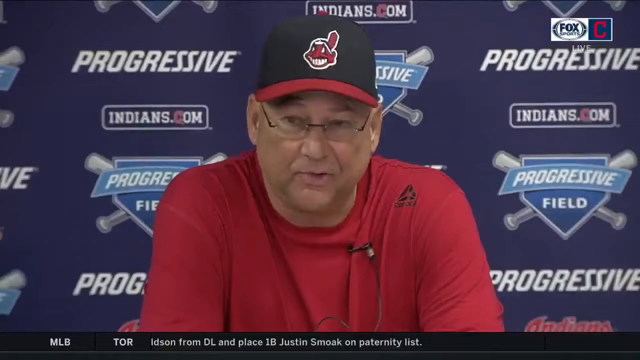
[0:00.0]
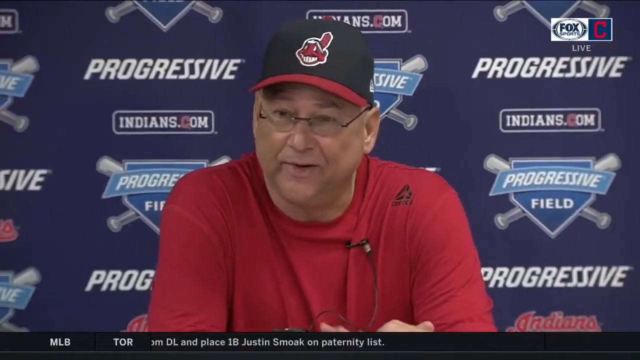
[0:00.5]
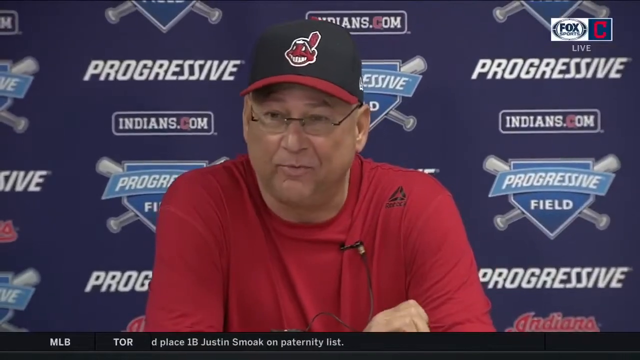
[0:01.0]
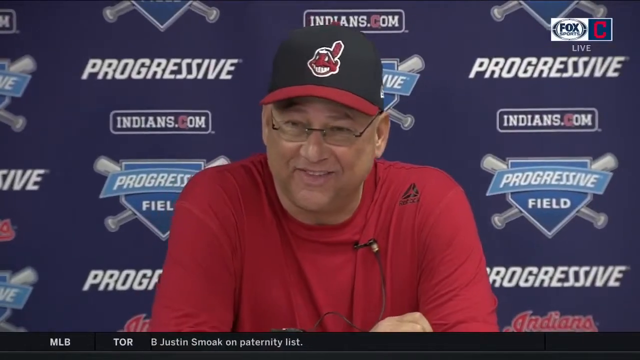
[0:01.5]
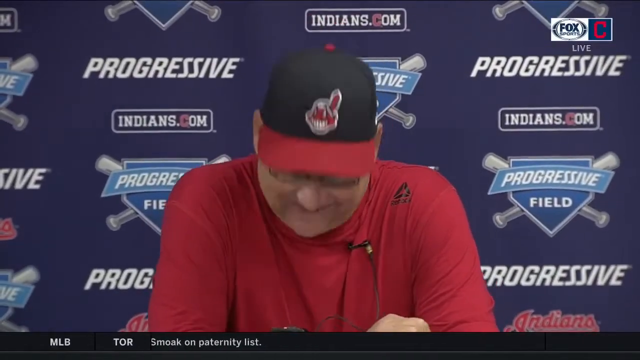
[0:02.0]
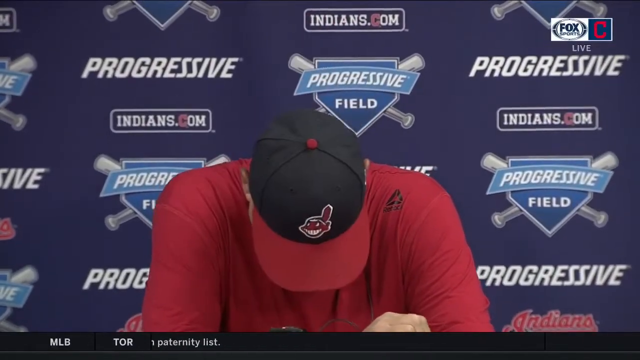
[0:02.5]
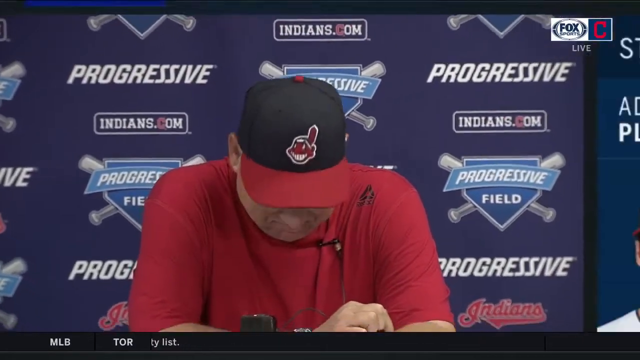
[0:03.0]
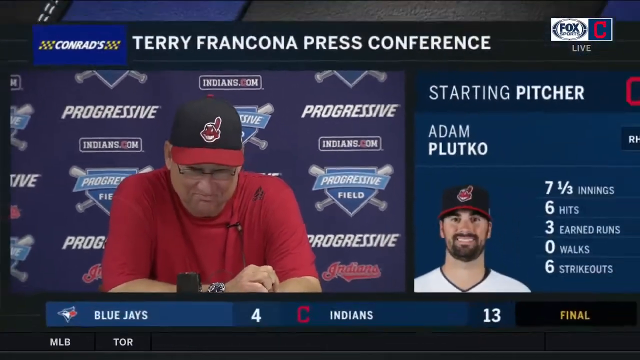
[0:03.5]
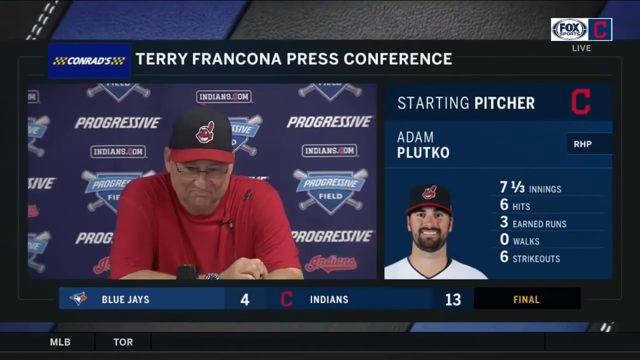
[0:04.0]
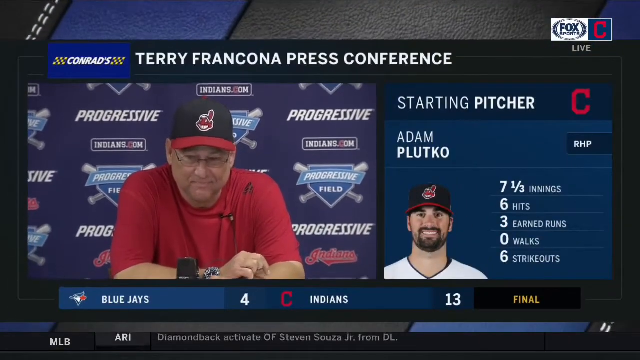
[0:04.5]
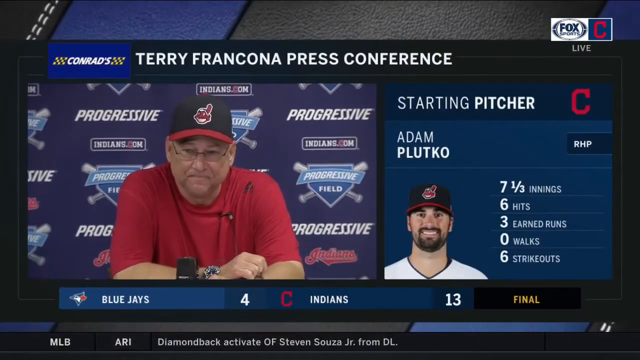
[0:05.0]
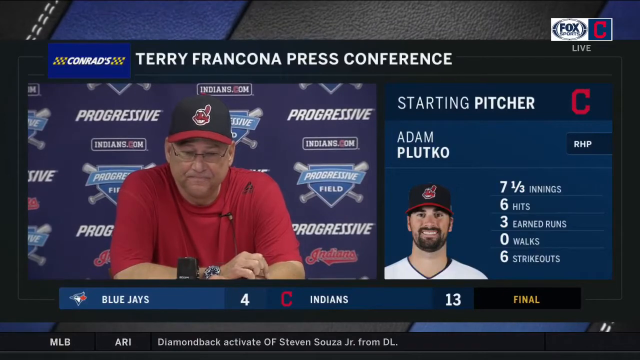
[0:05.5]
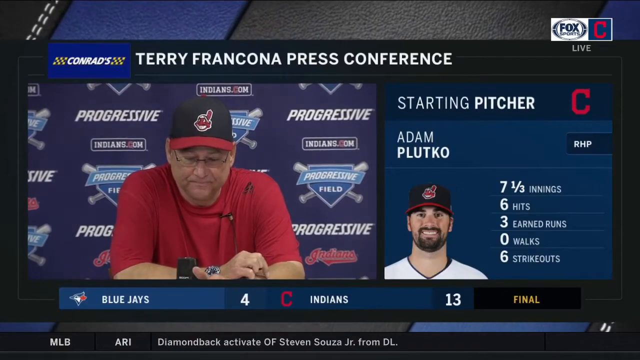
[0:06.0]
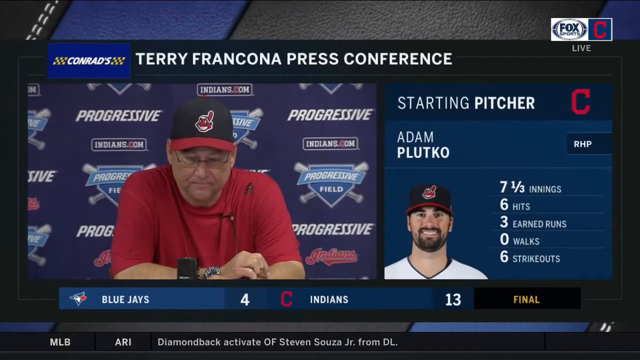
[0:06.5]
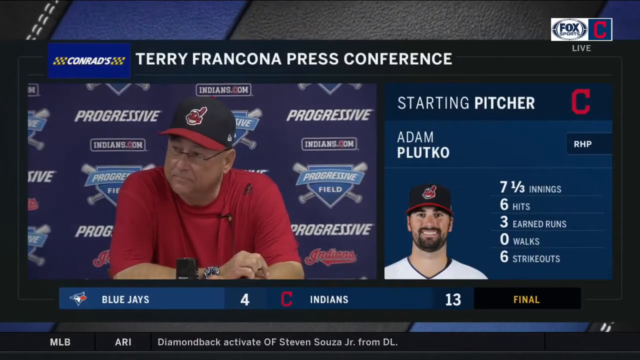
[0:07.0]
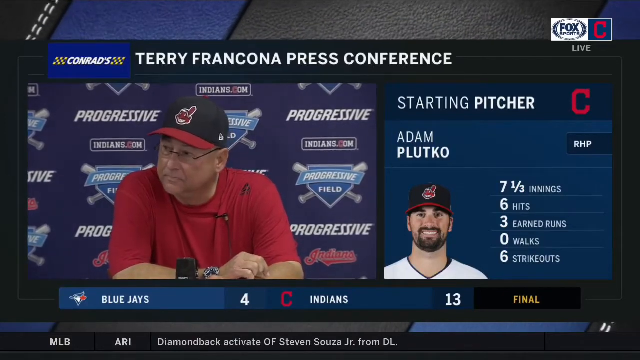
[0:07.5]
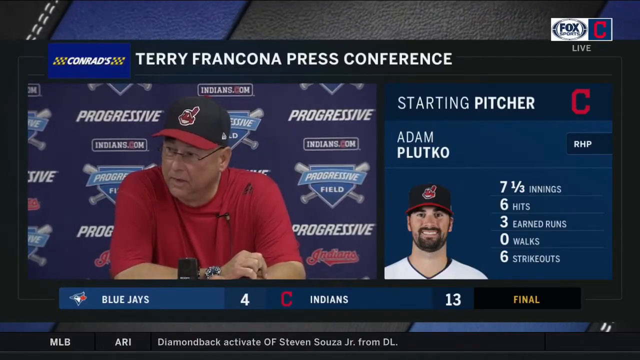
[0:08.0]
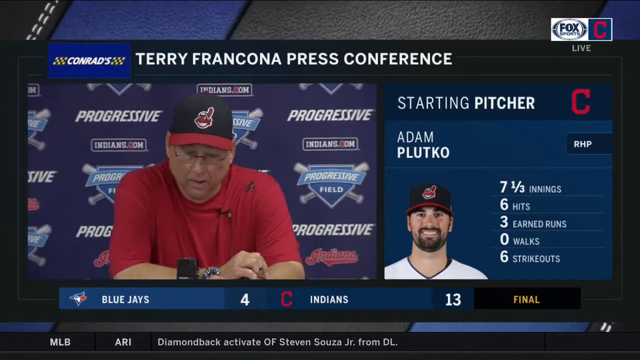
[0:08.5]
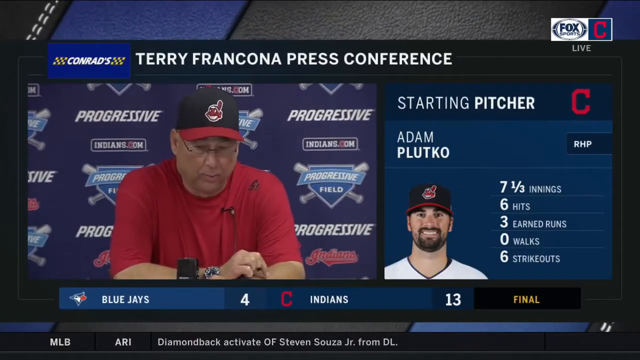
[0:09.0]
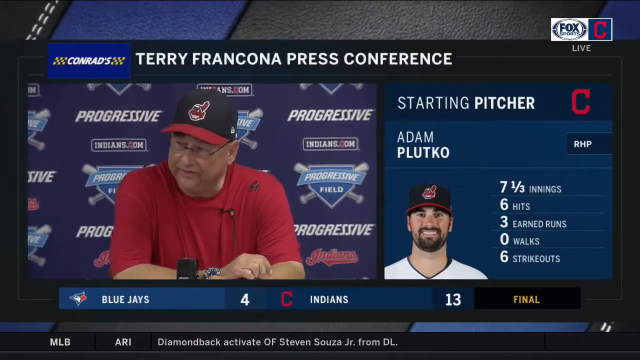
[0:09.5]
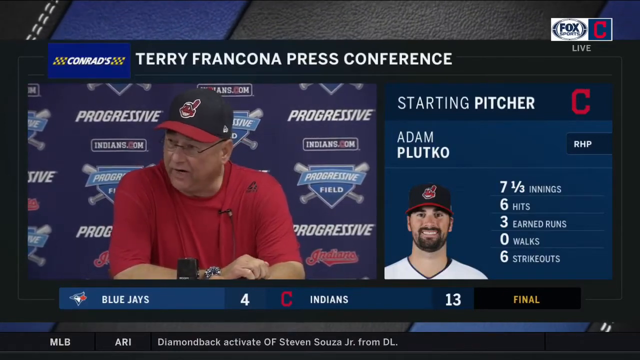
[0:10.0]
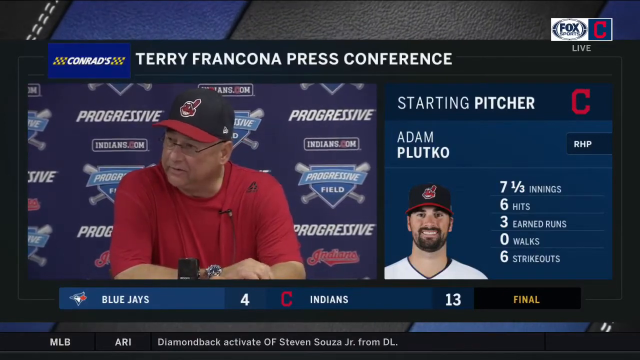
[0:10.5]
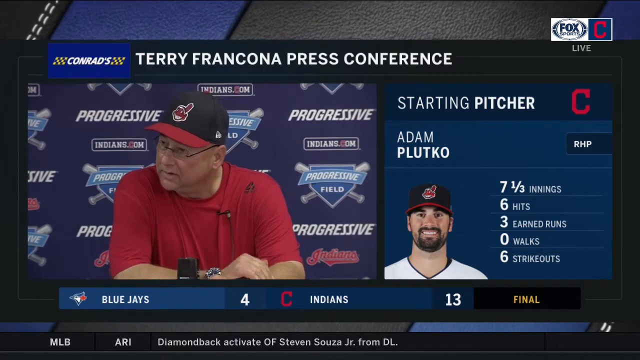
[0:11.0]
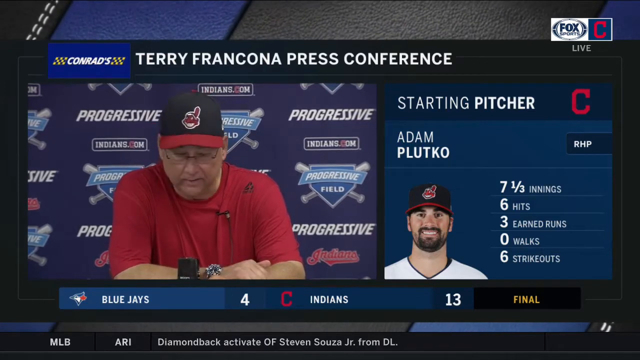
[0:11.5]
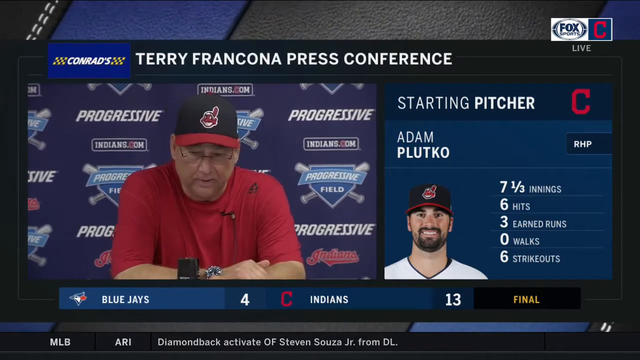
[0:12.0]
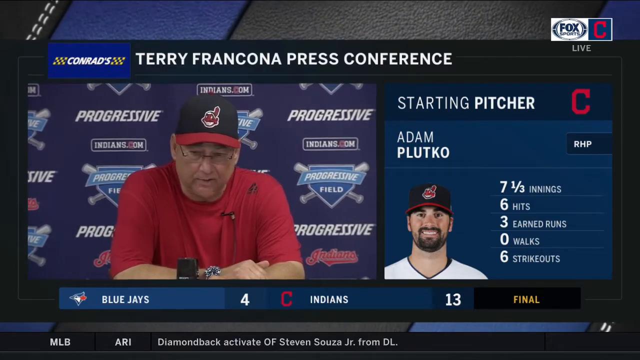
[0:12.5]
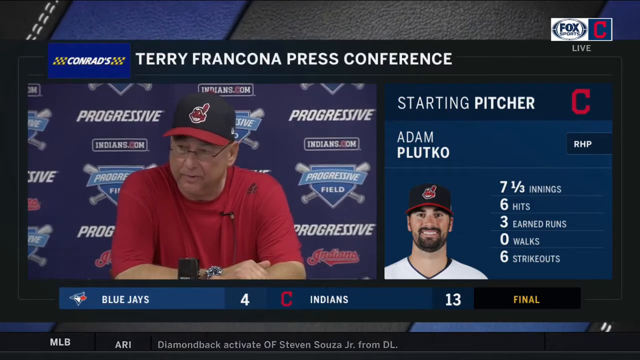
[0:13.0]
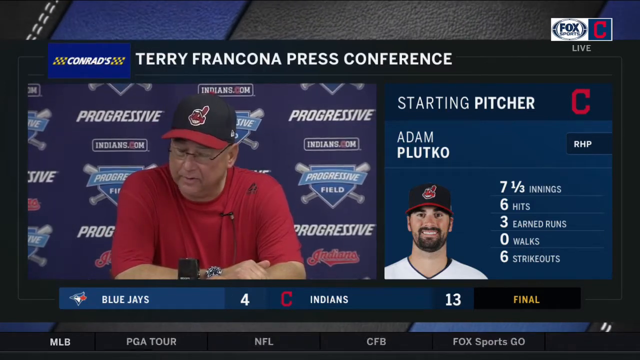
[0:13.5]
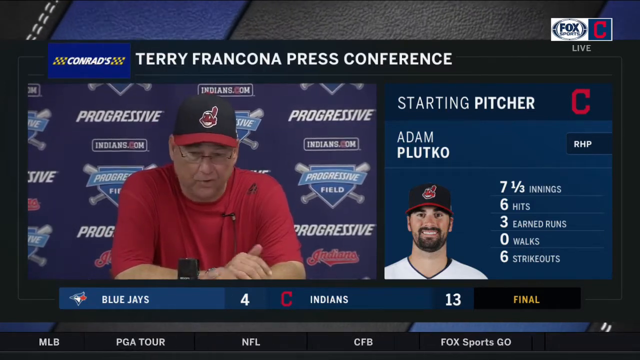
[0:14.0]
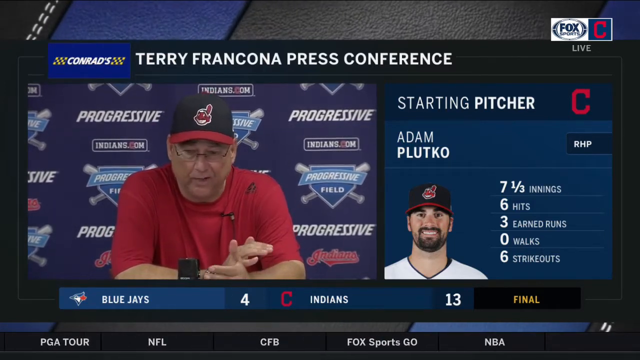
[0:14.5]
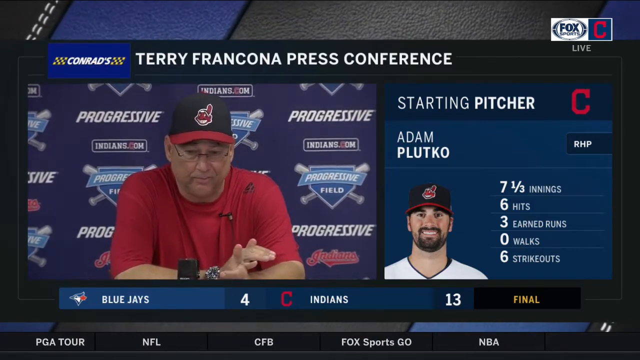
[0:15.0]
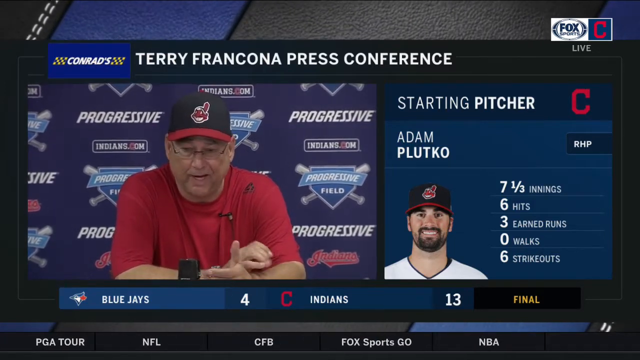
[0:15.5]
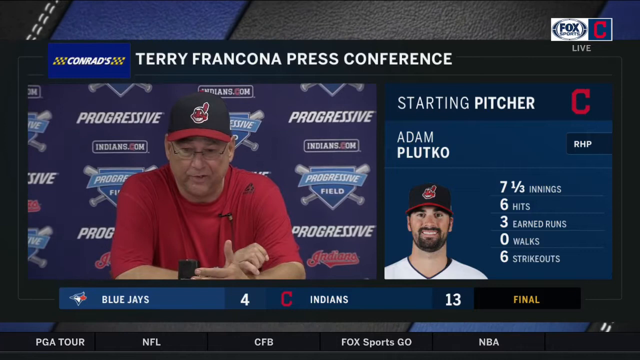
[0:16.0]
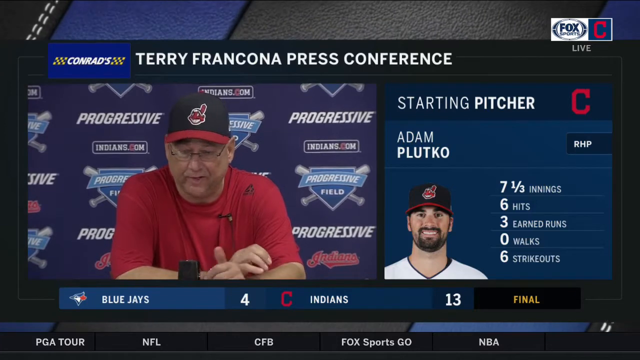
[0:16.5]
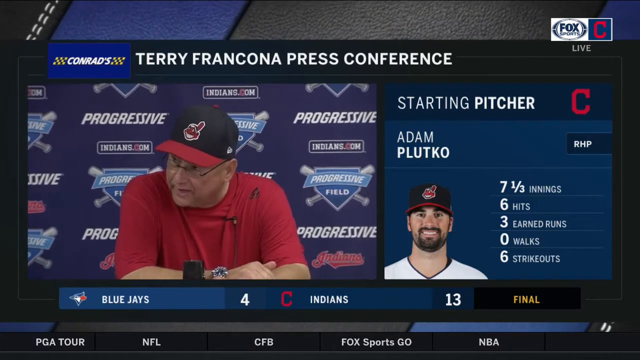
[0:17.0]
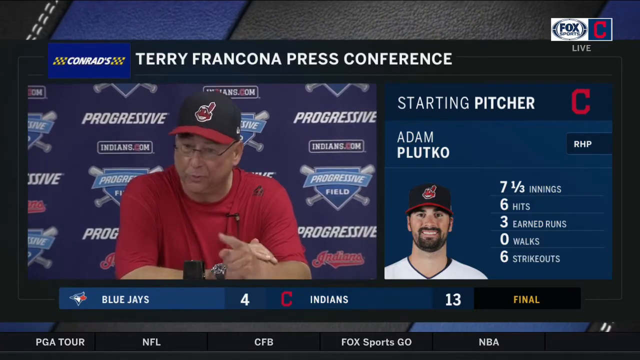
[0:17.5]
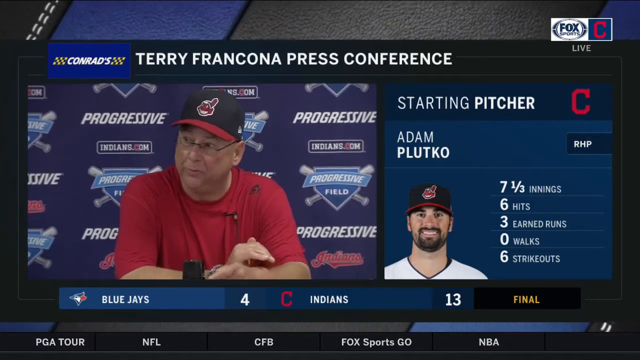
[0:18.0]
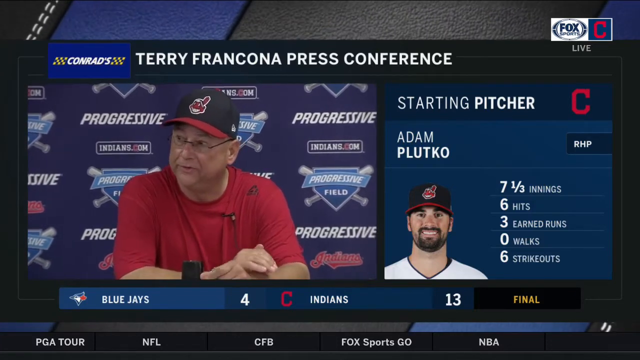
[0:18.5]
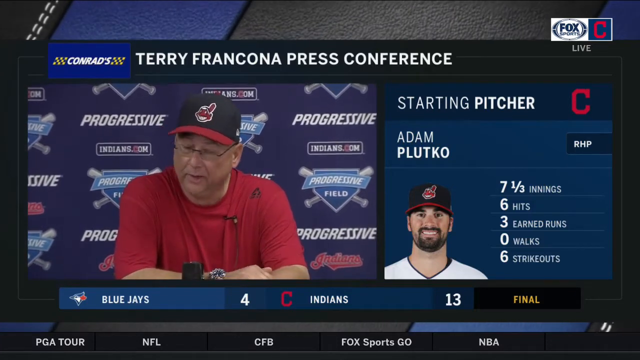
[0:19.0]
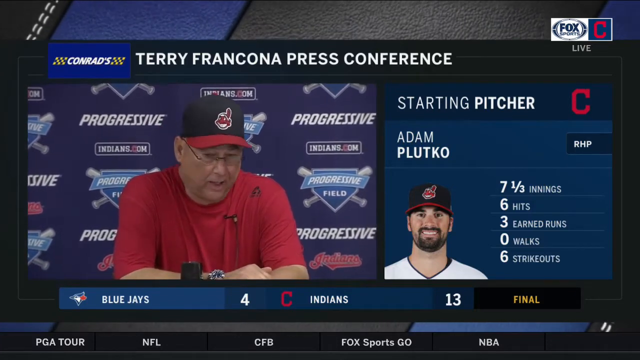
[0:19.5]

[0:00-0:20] The video appears to show a press conference after a sports game. A man wears a red shirt and dark-framed glasses with clear lenses, and he has a red and black hat. Company names such as Progressive are visible, and the Fox Sports logo is in the upper right-hand corner. His mouth moves as he talks; he laughs and puts his head down. As he raises his head again, a graphic pops up on the right side reading "starting pitcher" with the name Adam Plutko and apparently his face, listing 7 1/3 innings, six hits, three earned runs, a single walk and six strikeouts. He turns his head toward the left side of the screen, apparently to answer a question, and shakes his head. He talks toward a black microphone and keeps turning his head to the left, possibly toward a reporter asking questions.